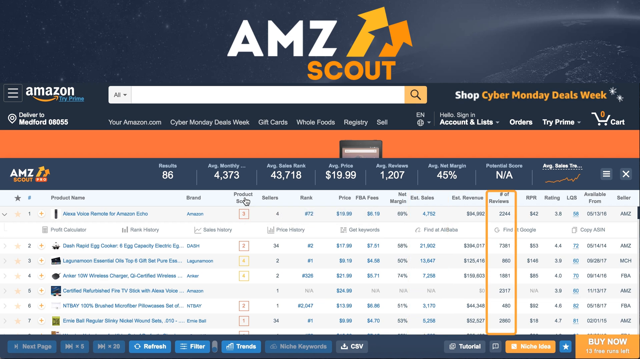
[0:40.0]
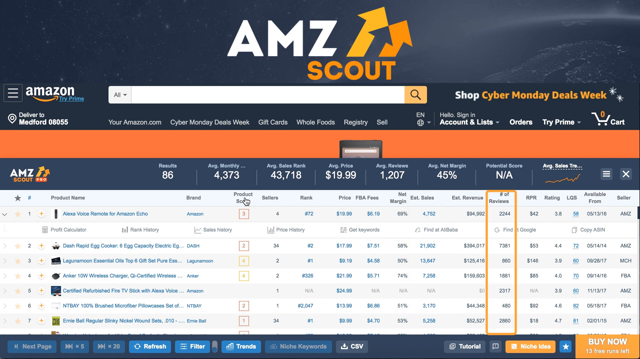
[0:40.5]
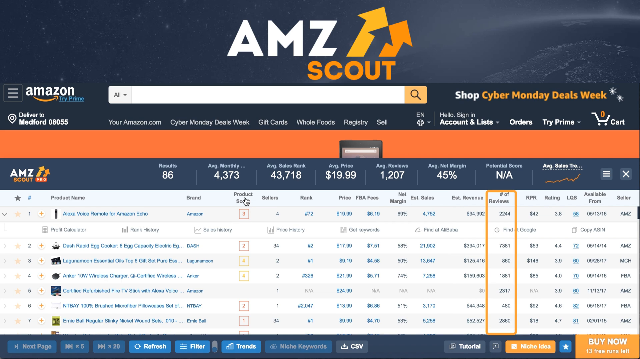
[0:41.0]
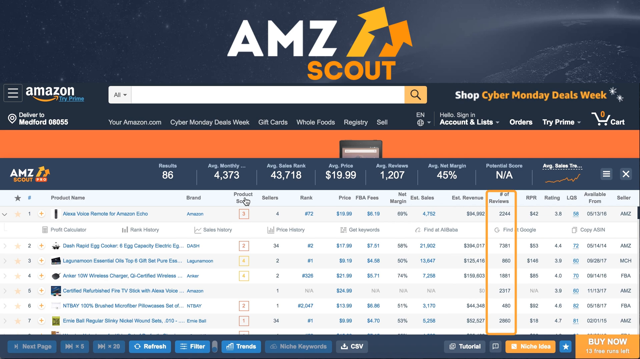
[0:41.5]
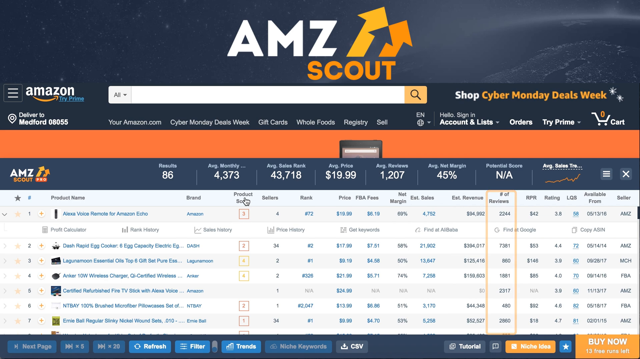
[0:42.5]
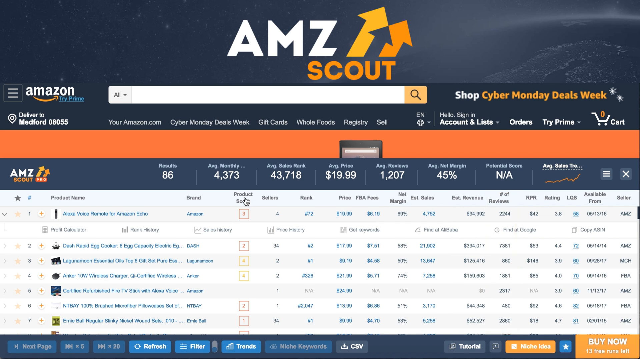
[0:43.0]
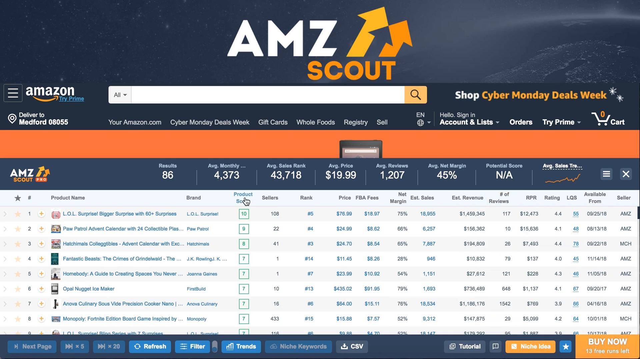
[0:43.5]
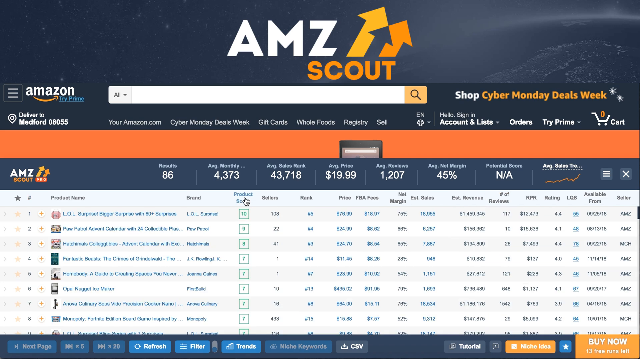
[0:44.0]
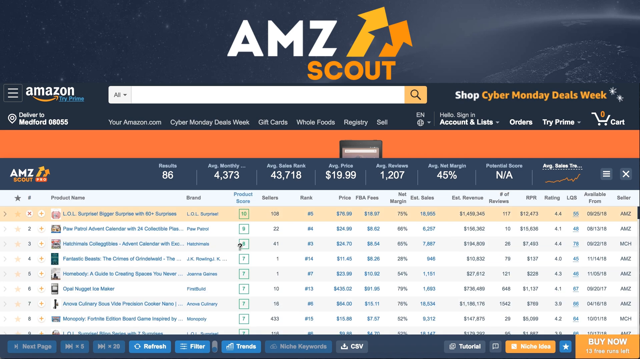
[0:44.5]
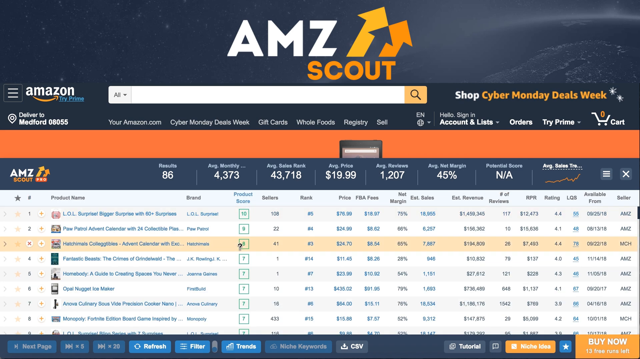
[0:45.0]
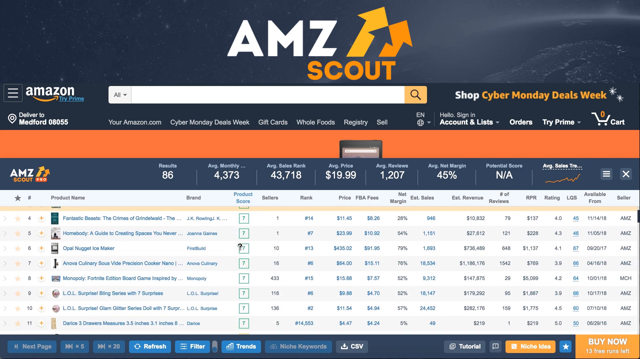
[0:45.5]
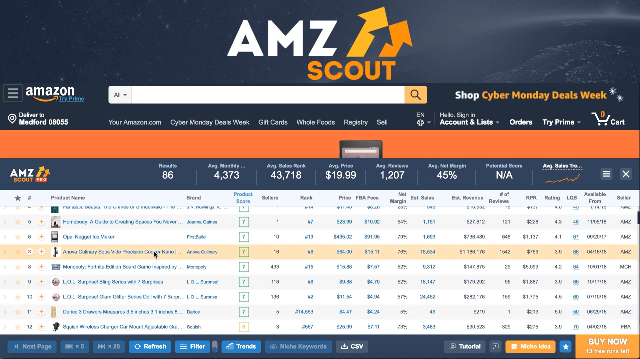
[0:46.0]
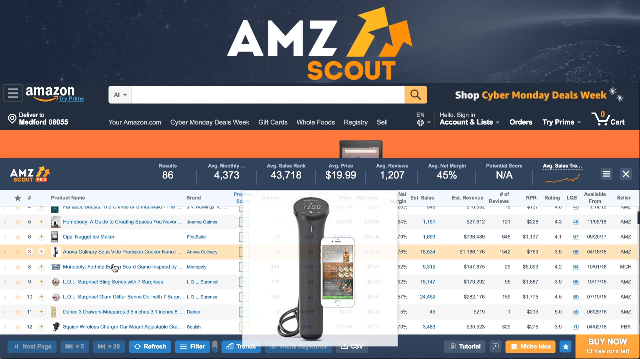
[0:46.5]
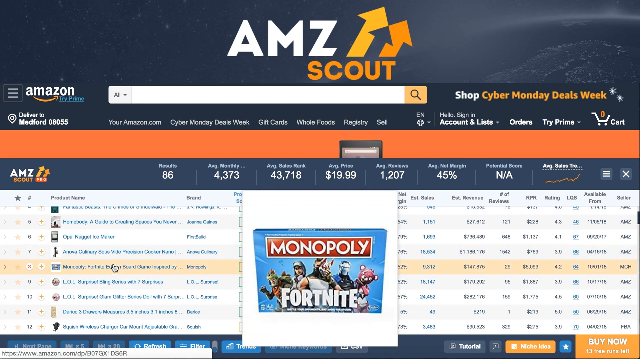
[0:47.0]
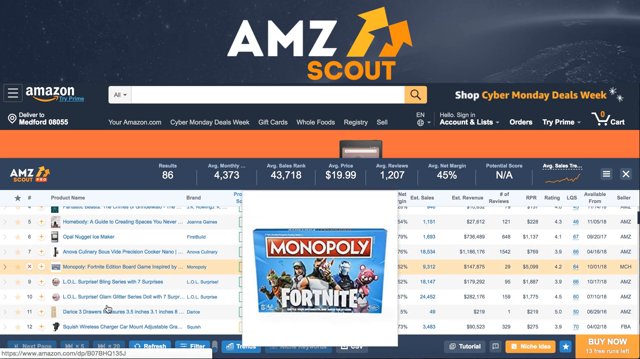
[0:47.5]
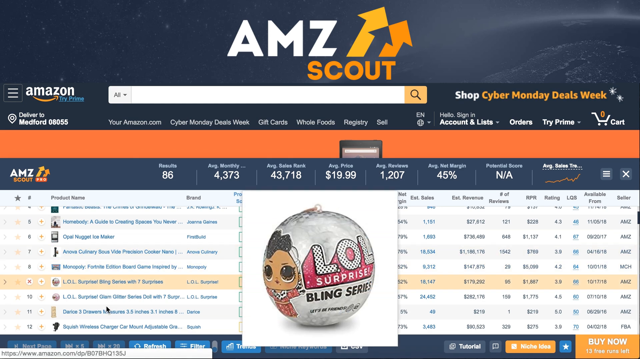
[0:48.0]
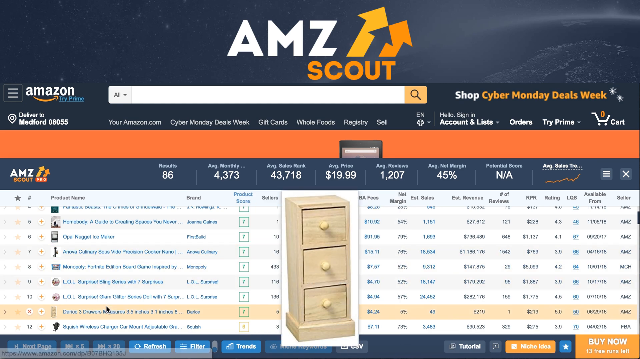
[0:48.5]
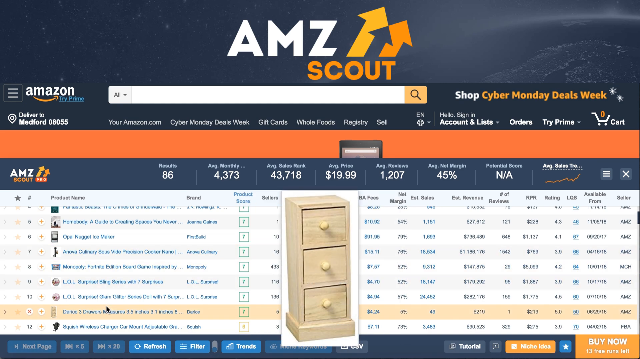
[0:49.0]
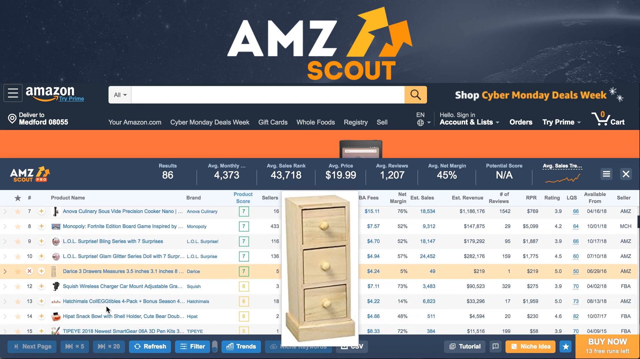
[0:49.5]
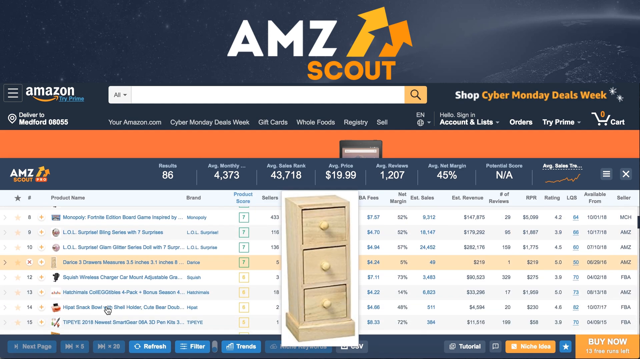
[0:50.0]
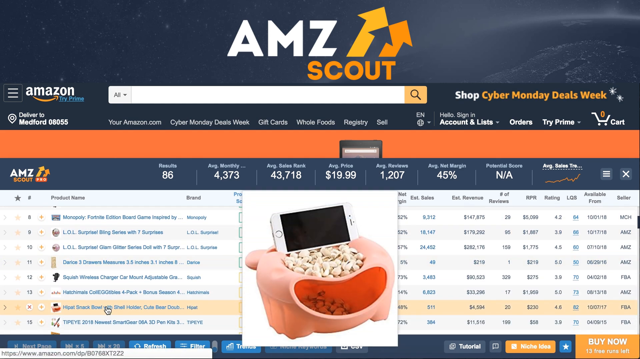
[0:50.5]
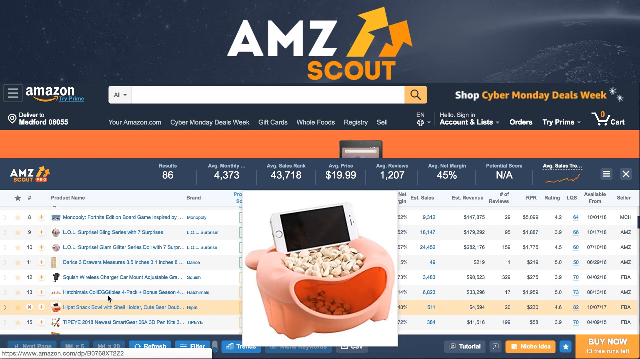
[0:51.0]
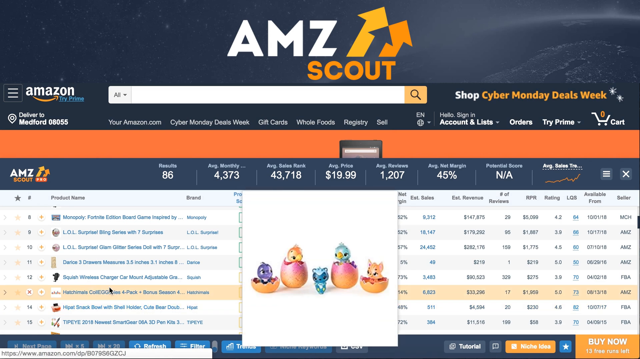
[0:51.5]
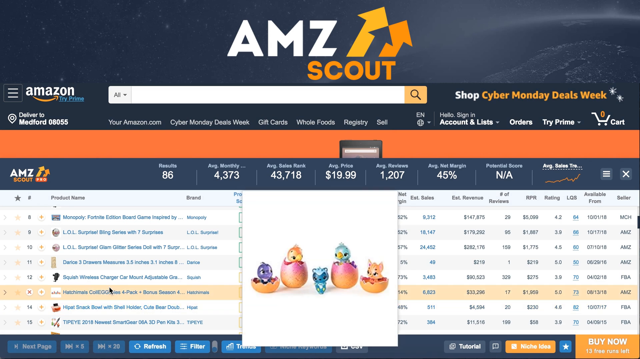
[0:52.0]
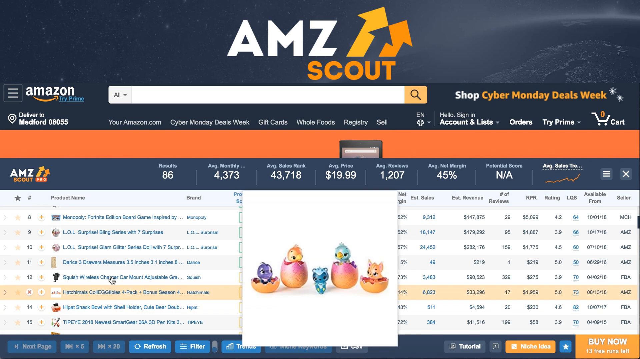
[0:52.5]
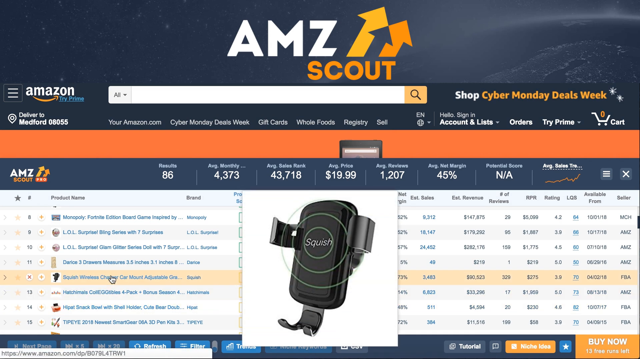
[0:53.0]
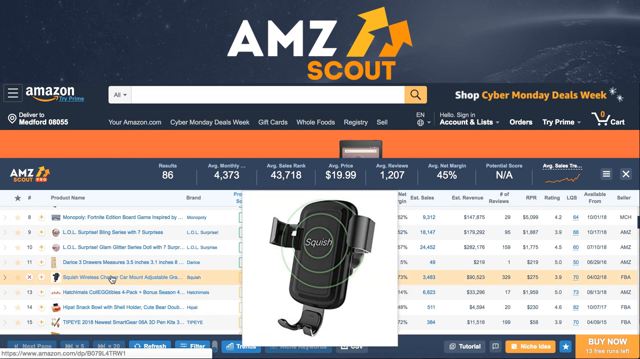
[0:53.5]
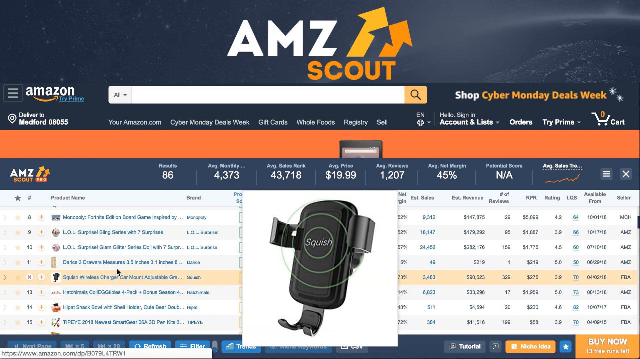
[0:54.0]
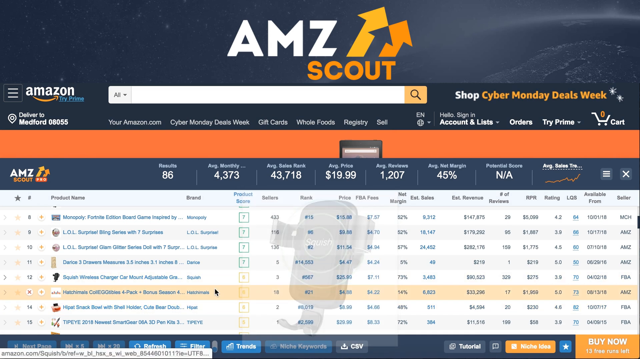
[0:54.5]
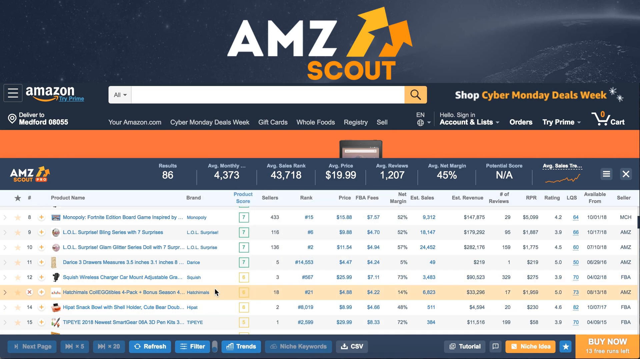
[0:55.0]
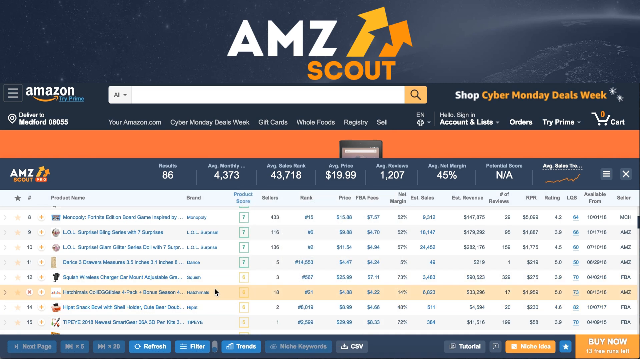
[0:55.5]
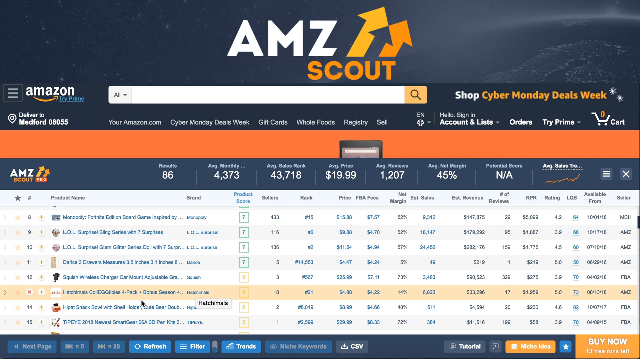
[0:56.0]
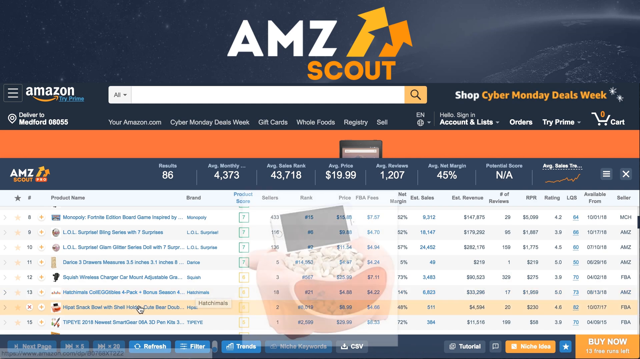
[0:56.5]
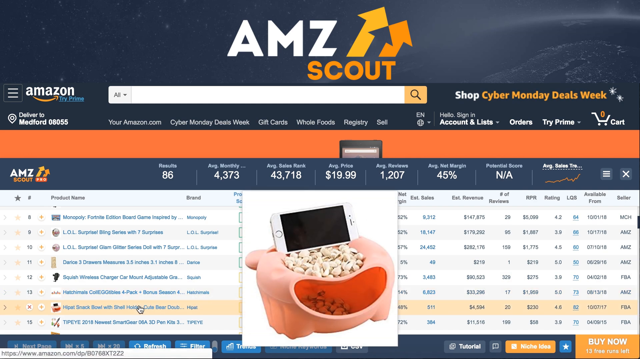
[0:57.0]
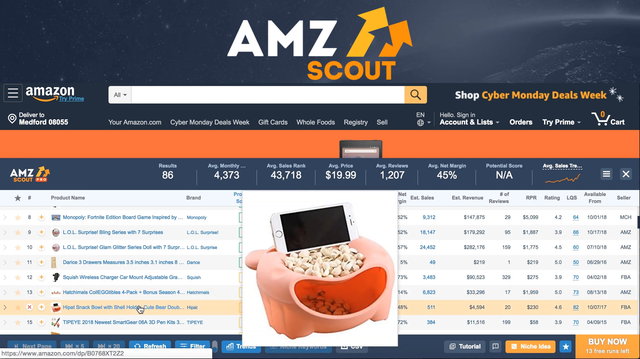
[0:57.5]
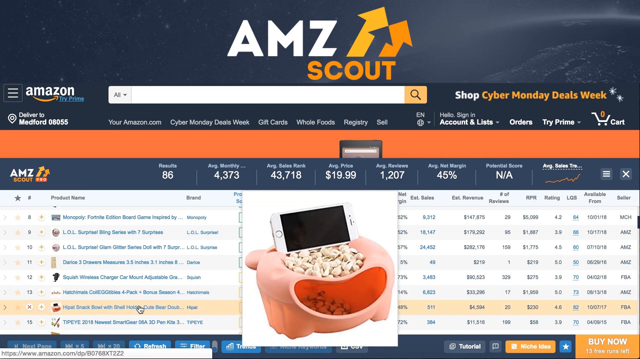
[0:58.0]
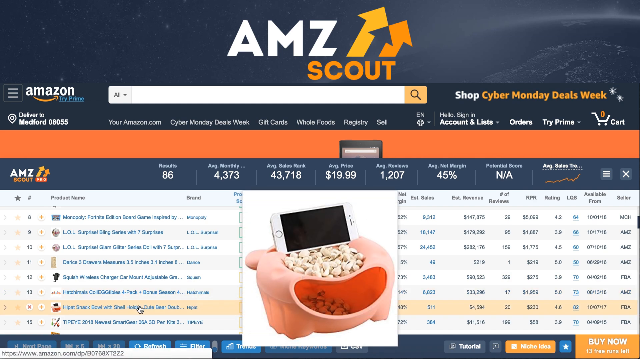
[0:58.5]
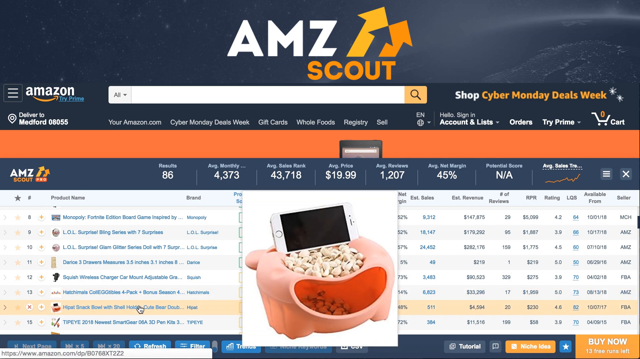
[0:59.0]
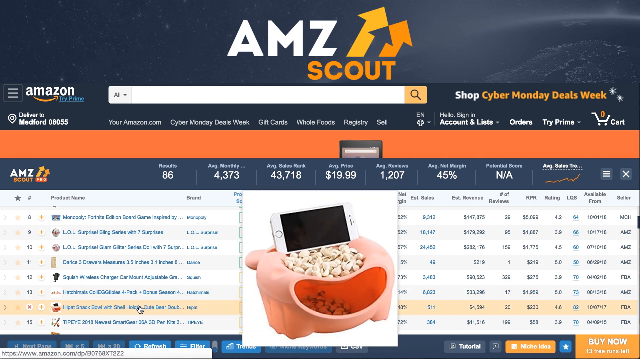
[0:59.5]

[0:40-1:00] The number of reviews is circled to draw attention to it. The list scrolls down and Monopoly Fortnight is selected; hovering over the product name makes a picture of it appear. The same is done with LOL Surprise Bling Series, and a picture of the product appears. The list keeps scrolling: a snack bowl that holds a phone along with snacks appears, then little chickens coming out of eggs and a little cat, with four eggs and four little animals emerging, and then an animal standing. Next comes a vehicle phone mount called Squish, and then a circled number of reviews. The video appears to show someone analyzing product data on Amazon's website.